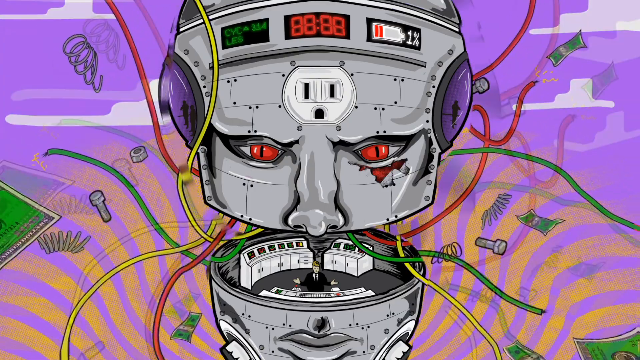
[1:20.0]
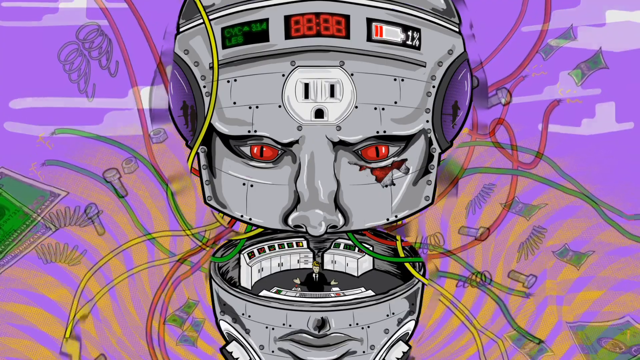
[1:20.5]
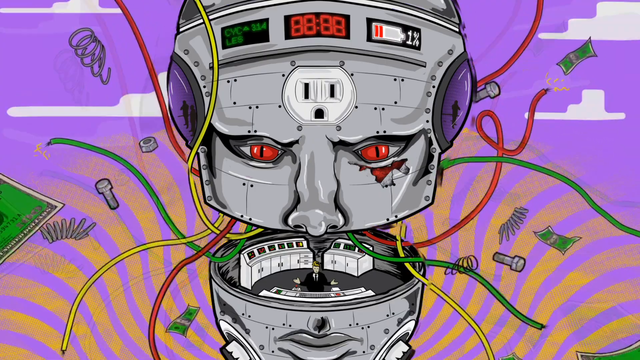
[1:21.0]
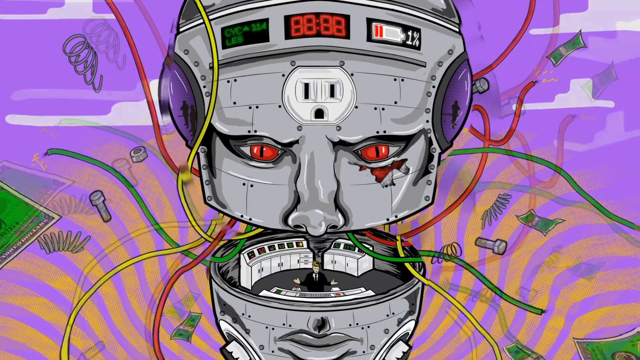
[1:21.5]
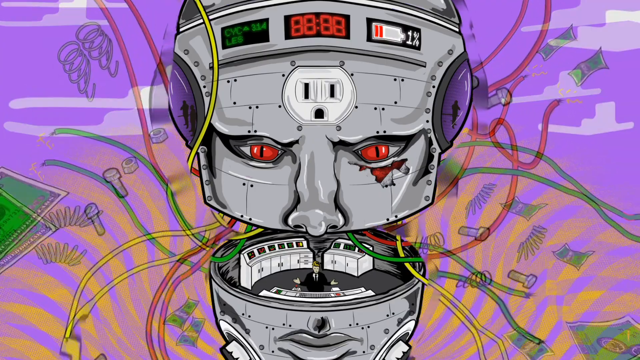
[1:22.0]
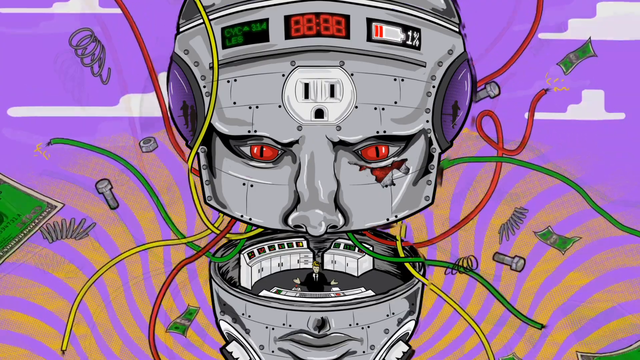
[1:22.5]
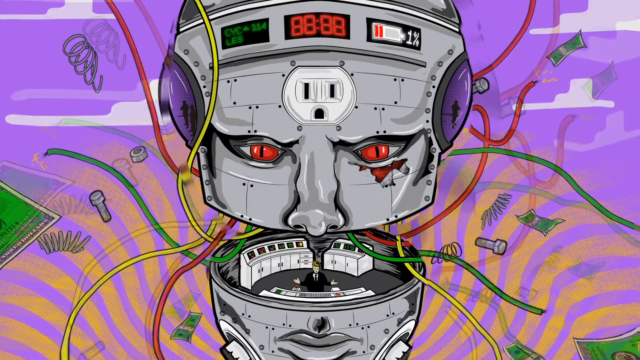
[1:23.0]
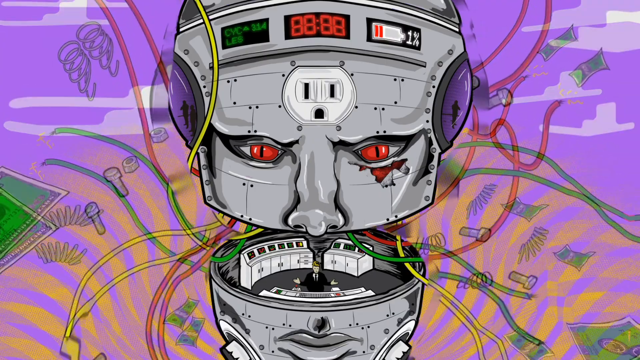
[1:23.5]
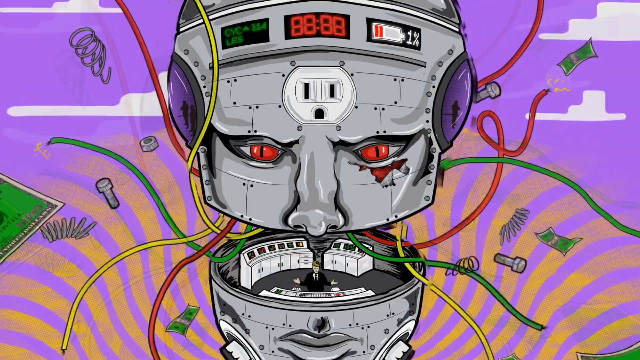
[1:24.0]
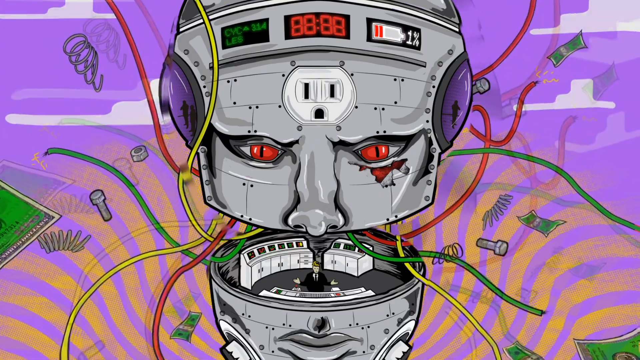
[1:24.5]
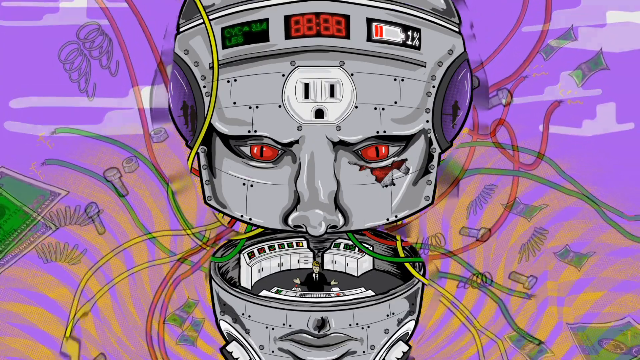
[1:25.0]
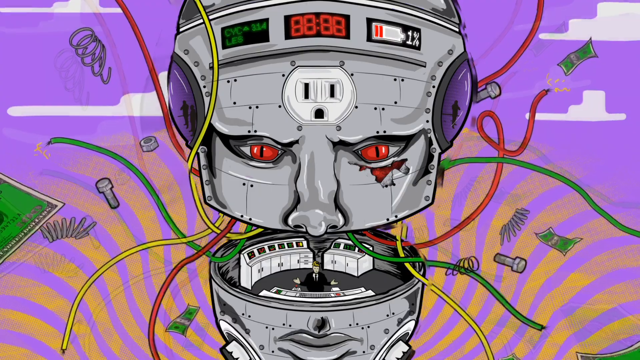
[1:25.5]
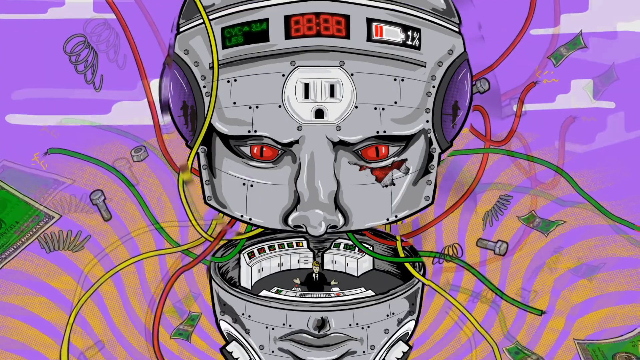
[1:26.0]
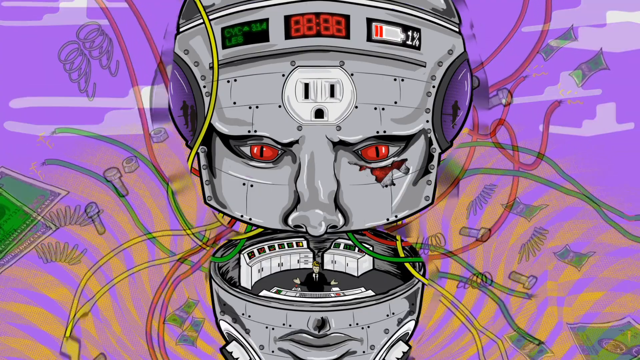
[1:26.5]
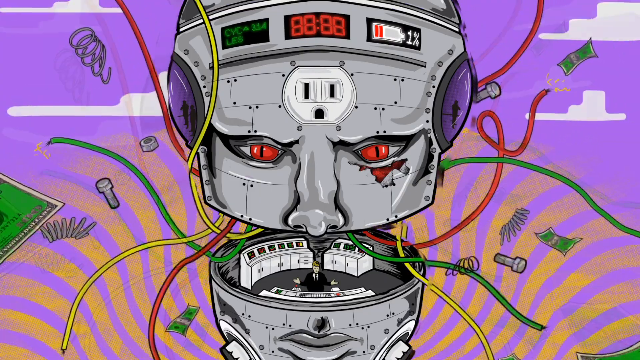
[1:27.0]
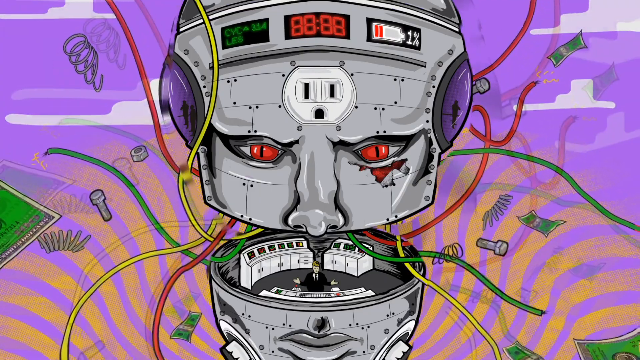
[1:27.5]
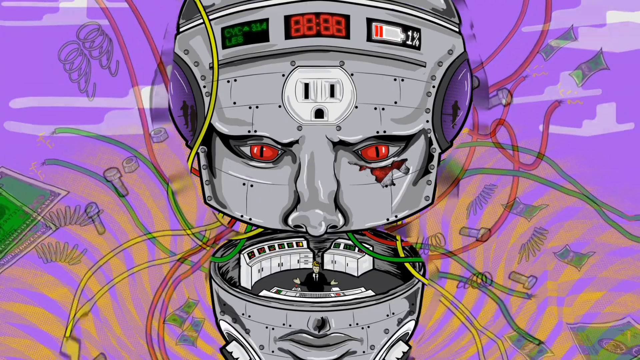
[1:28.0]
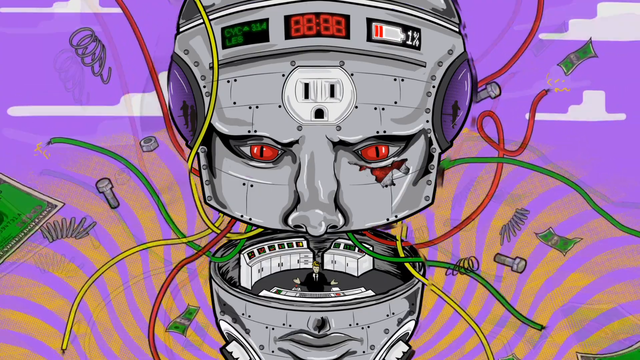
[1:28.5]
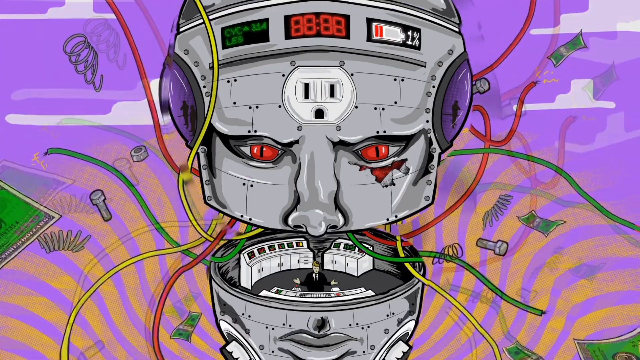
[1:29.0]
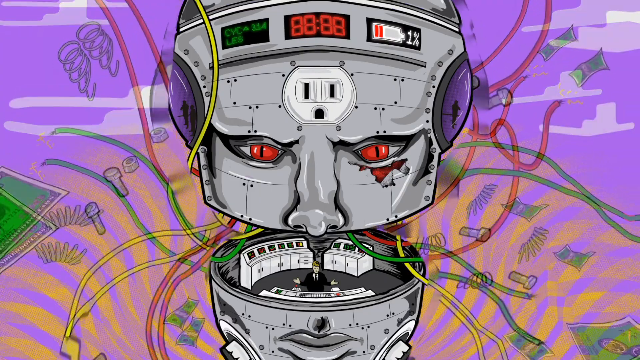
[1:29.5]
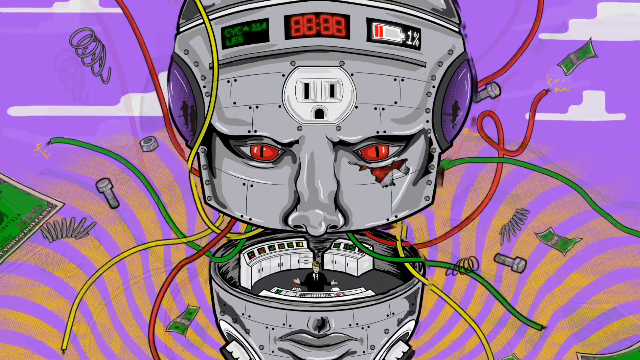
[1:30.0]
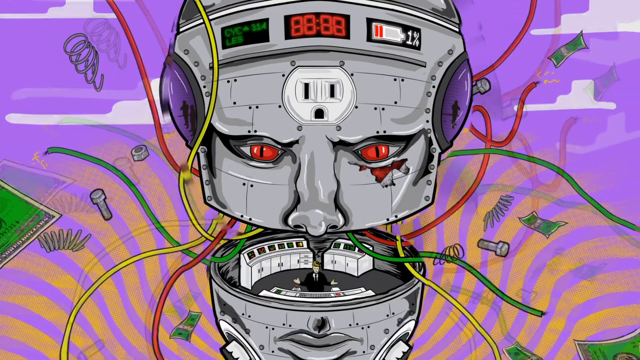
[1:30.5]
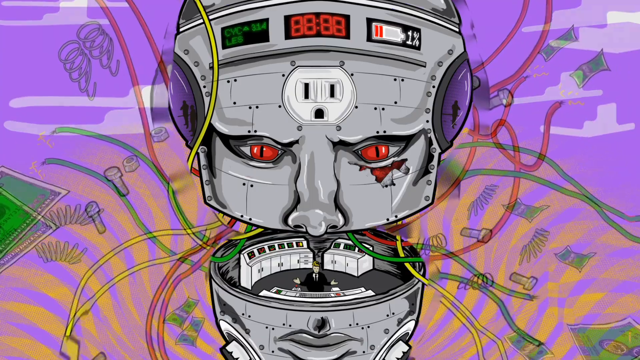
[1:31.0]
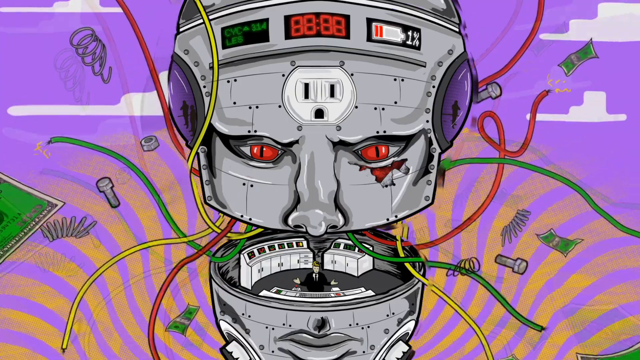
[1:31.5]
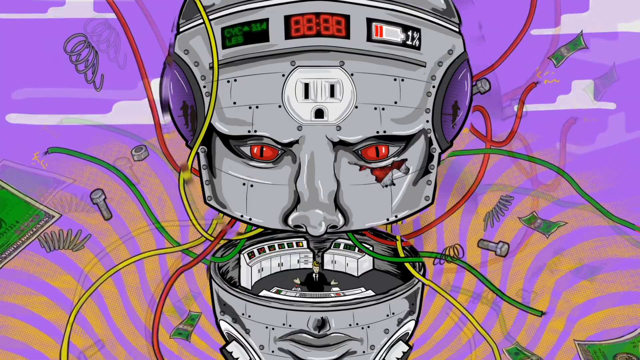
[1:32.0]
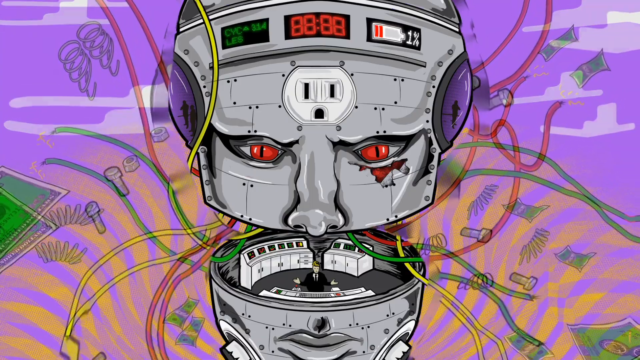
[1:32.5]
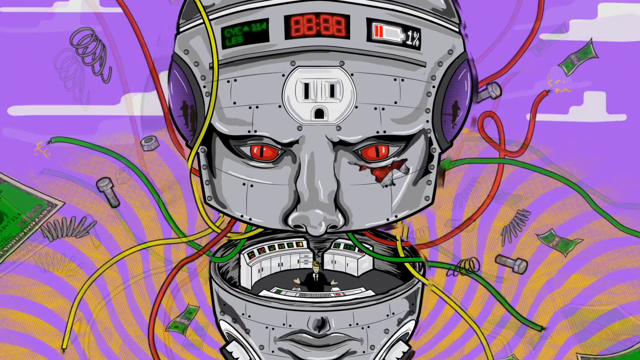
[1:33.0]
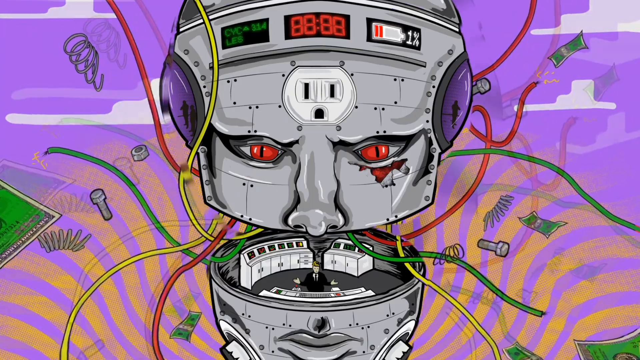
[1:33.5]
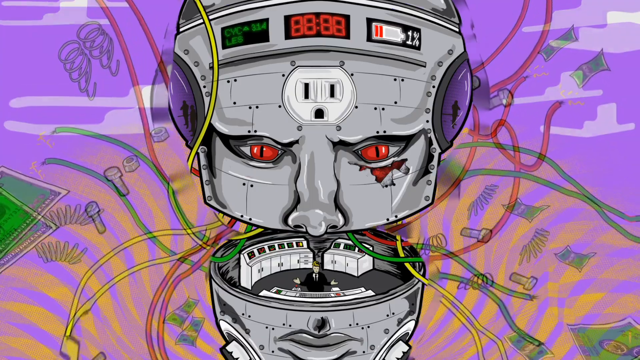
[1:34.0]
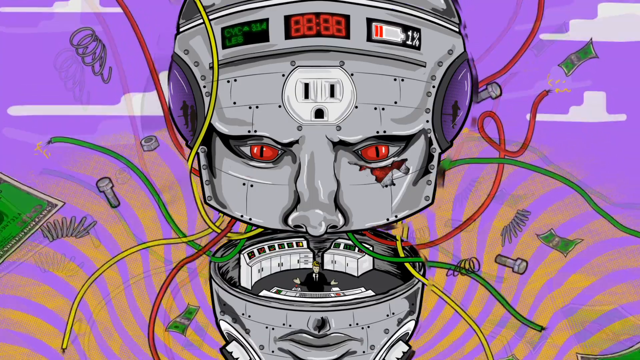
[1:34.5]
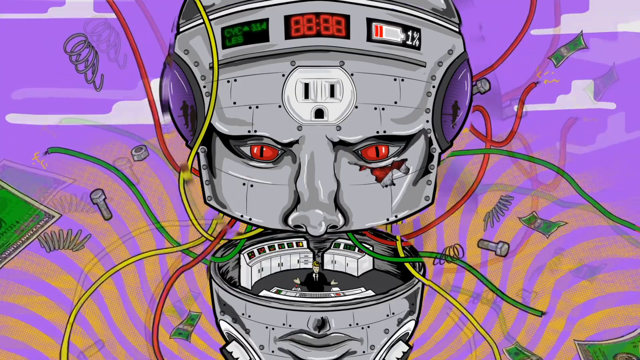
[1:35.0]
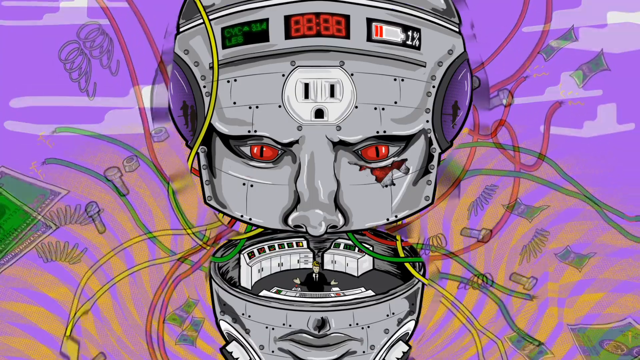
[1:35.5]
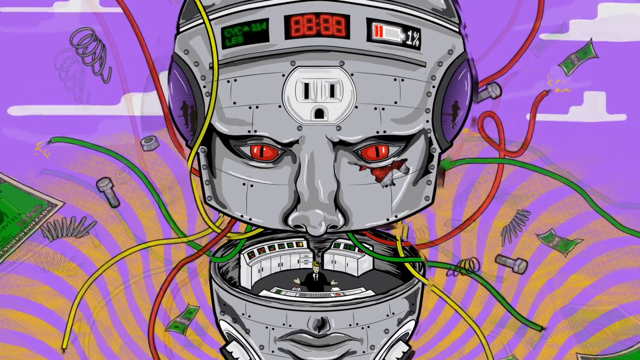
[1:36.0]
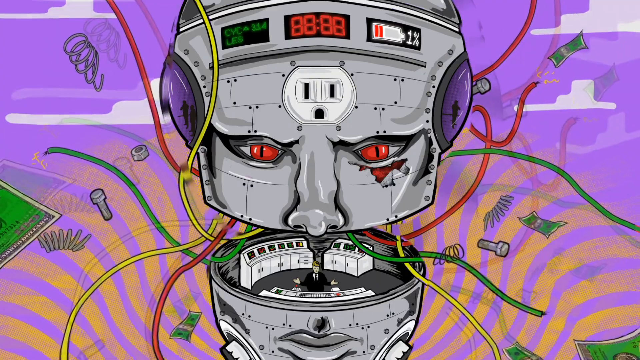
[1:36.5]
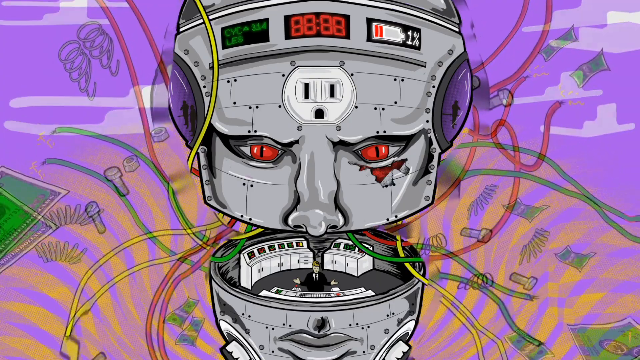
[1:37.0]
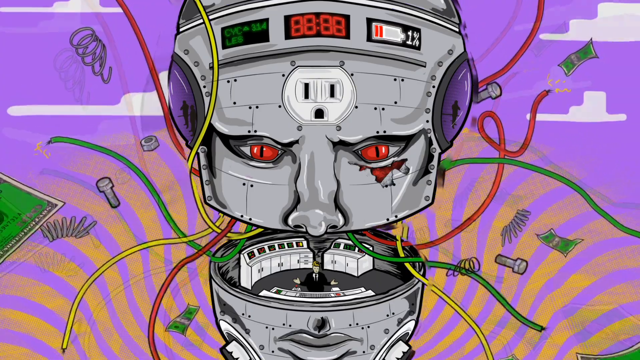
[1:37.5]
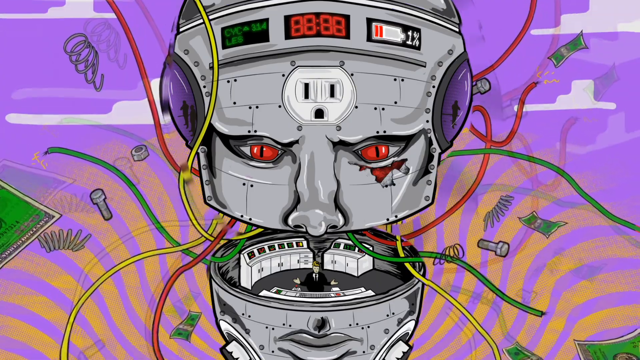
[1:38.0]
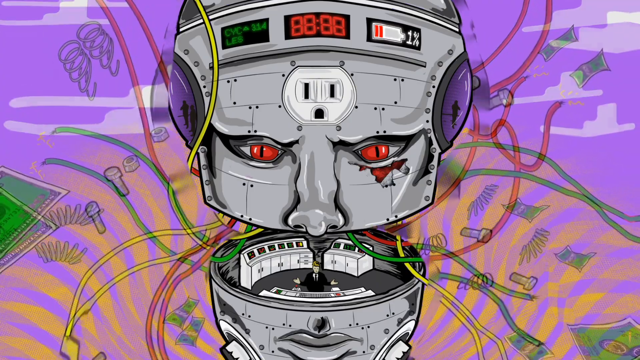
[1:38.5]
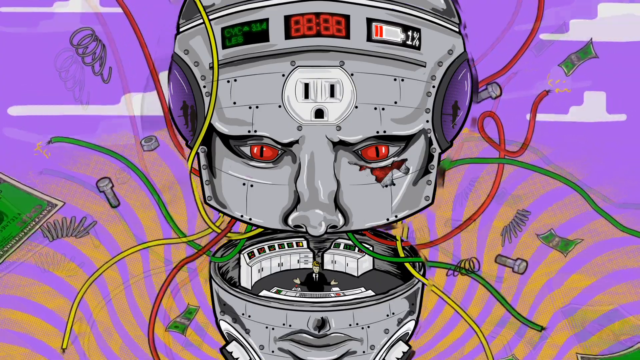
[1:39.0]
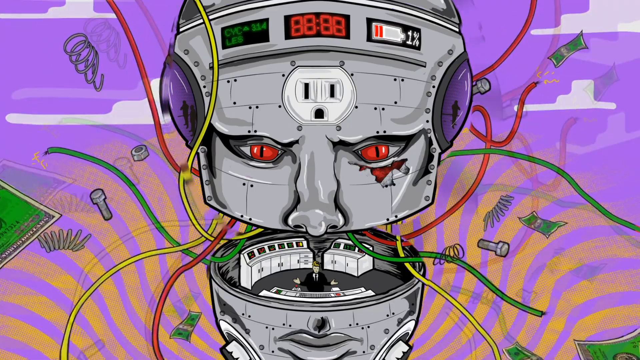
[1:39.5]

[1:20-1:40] The scene has a purple background with some white wavy clouds. The main focus appears to be the head of a giant robot, which looks opened. Red, yellow and green wires come out with electricity coming out of them. A giant white outlet is in the middle of the robot's forehead. The robot has red eyes and an injury under the eye on the viewer's right. A clock in the middle of the top of the head reads "88;88"; to its left is "314 cycles", and to its right a battery power indicator shows only 1% battery power remaining. In the split in the head, a man in a black suit stands in a control room with his hands facing up. The bottom of the head shows the robot's mouth and chin. In front of the purple sky, yellow wavy lines move counterclockwise, springs and bolts fly through the air behind the robot, and dollar bills fly around in the same counterclockwise motion.